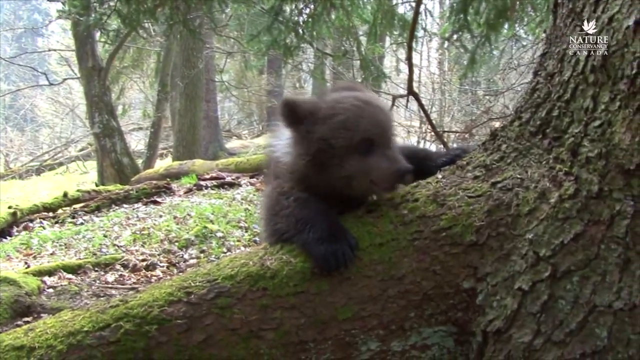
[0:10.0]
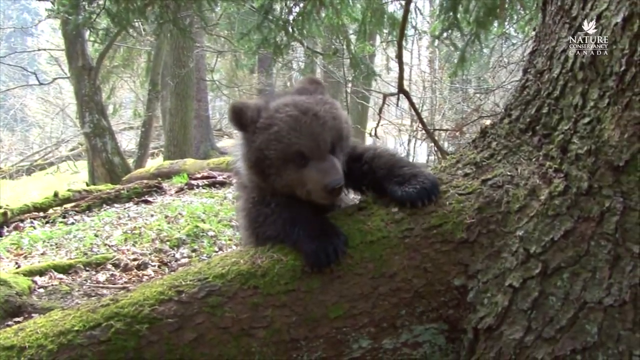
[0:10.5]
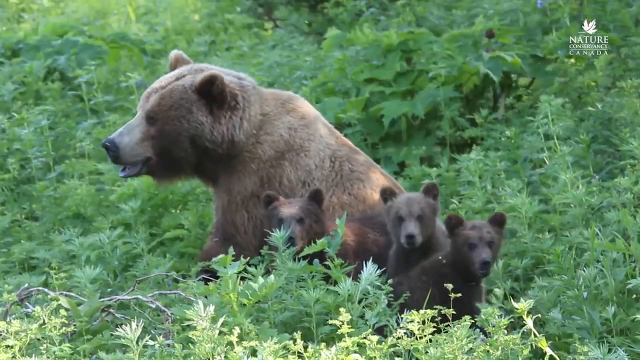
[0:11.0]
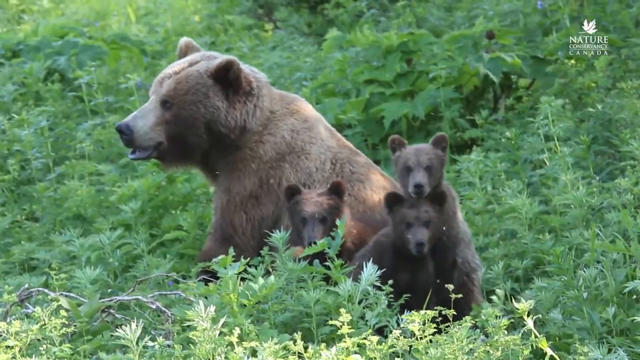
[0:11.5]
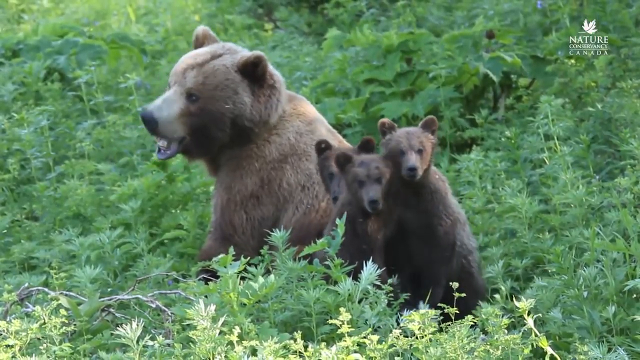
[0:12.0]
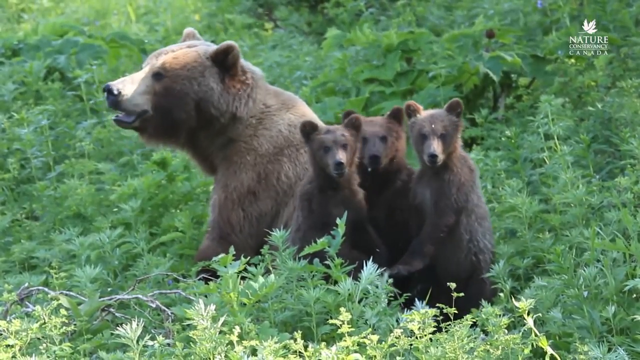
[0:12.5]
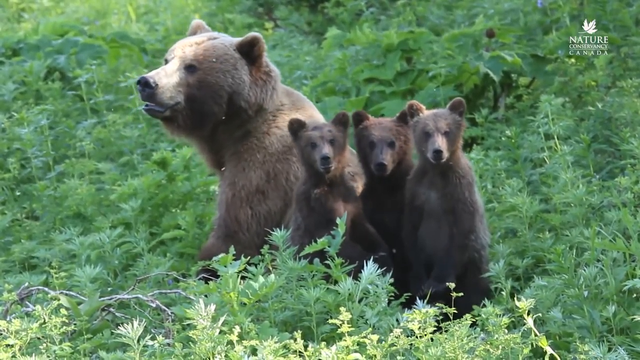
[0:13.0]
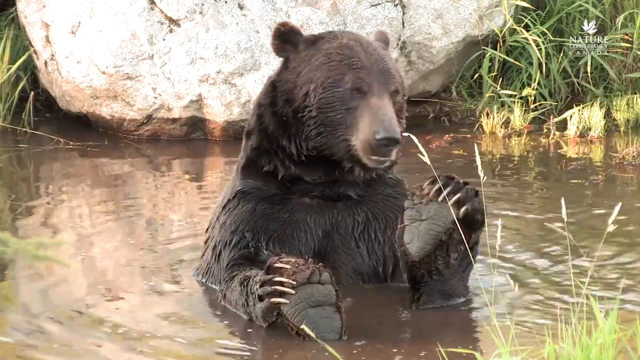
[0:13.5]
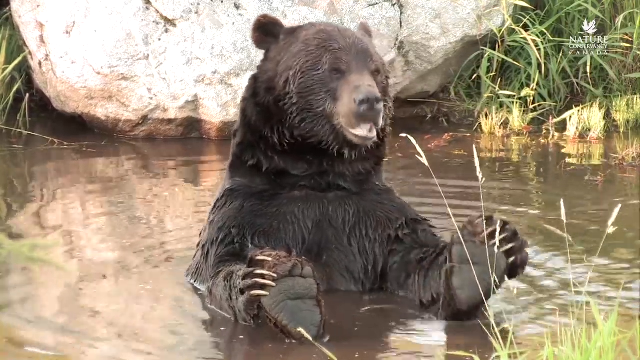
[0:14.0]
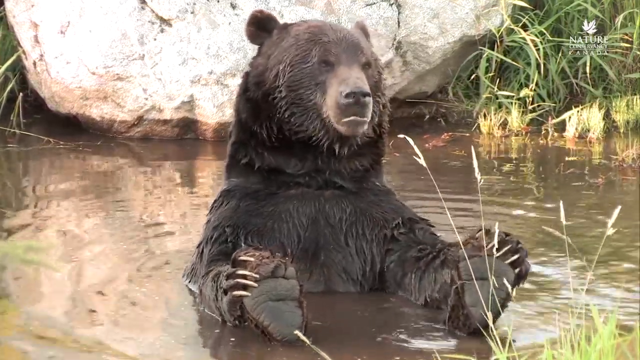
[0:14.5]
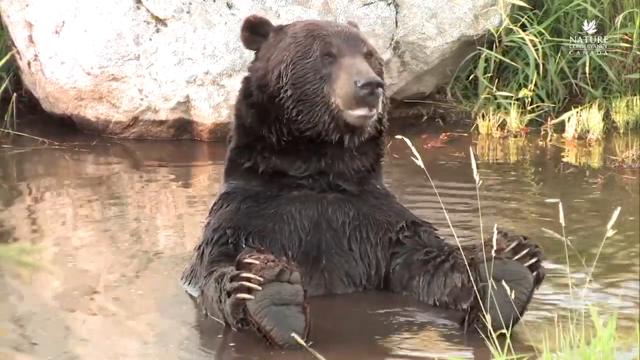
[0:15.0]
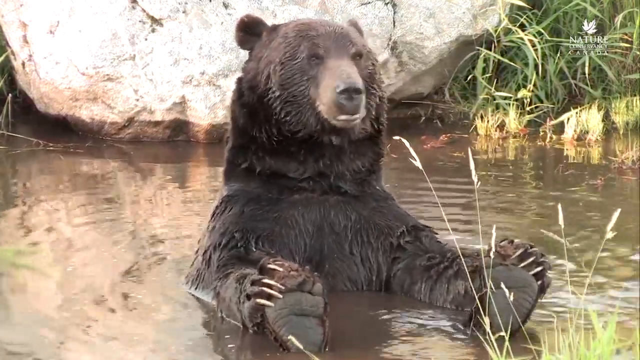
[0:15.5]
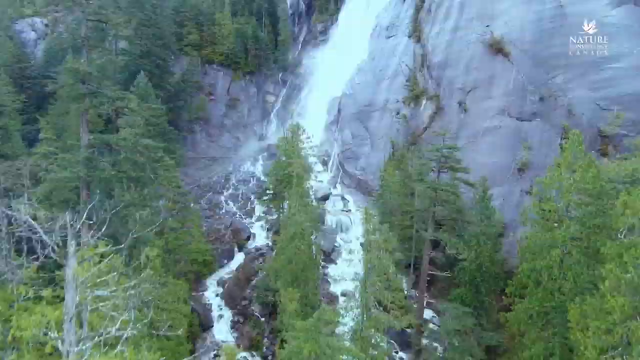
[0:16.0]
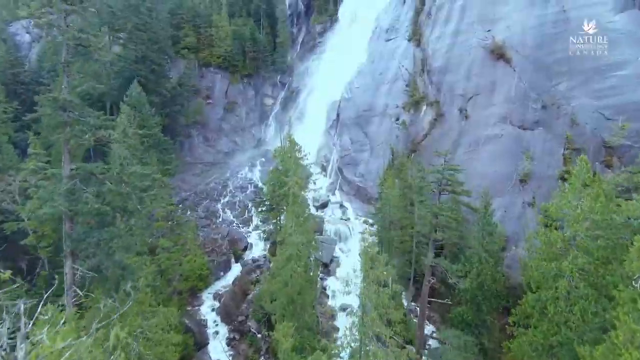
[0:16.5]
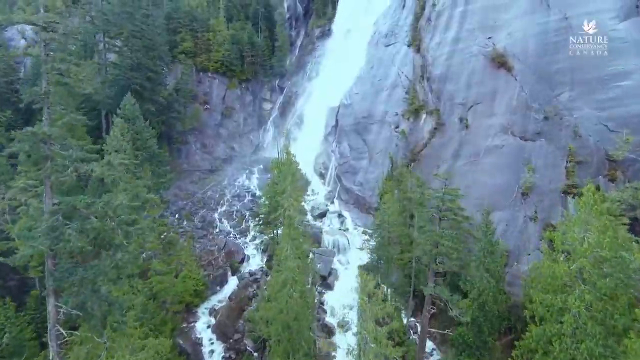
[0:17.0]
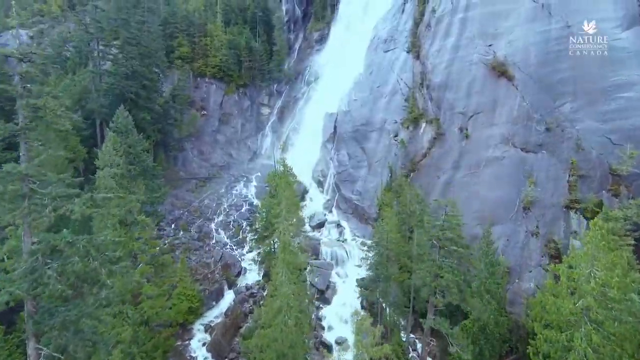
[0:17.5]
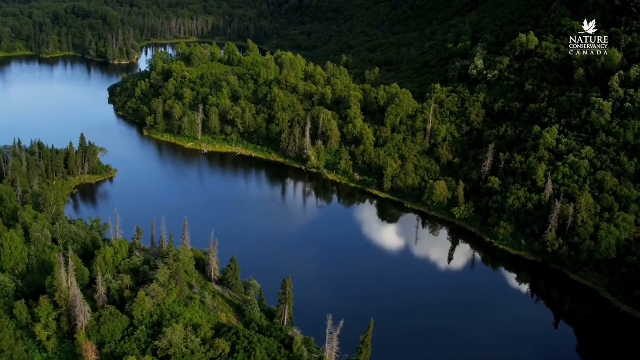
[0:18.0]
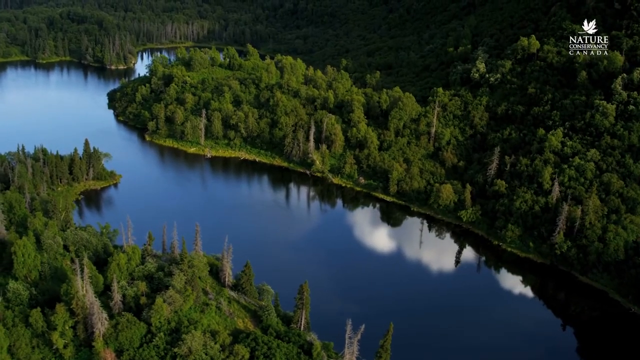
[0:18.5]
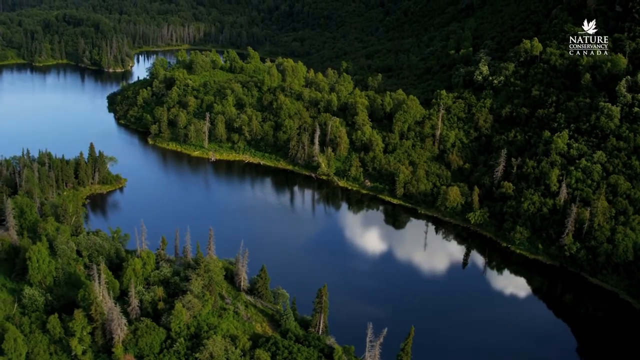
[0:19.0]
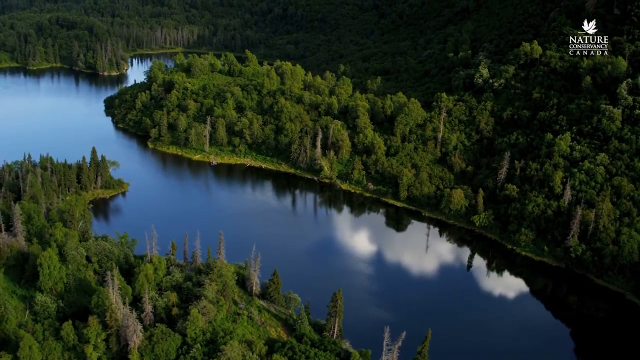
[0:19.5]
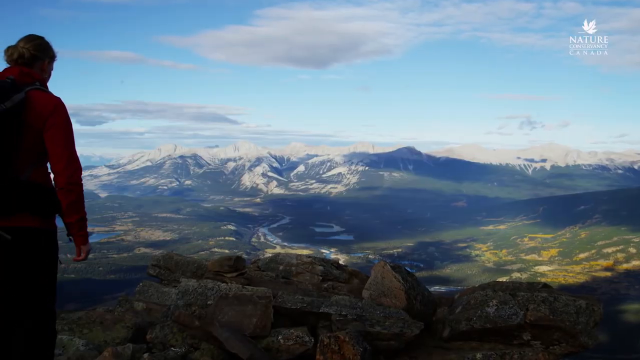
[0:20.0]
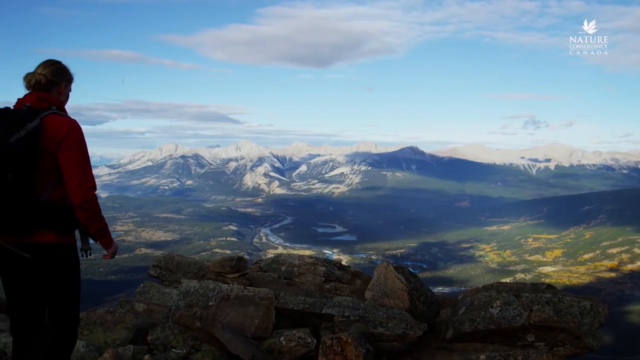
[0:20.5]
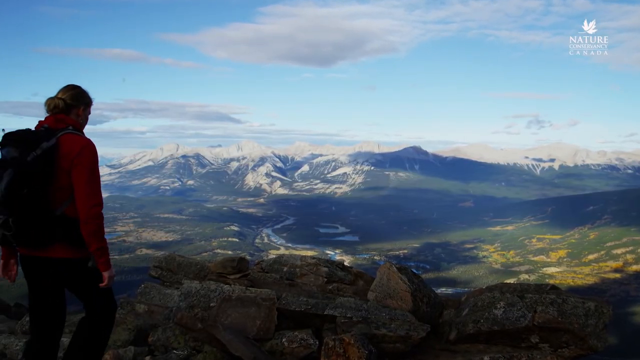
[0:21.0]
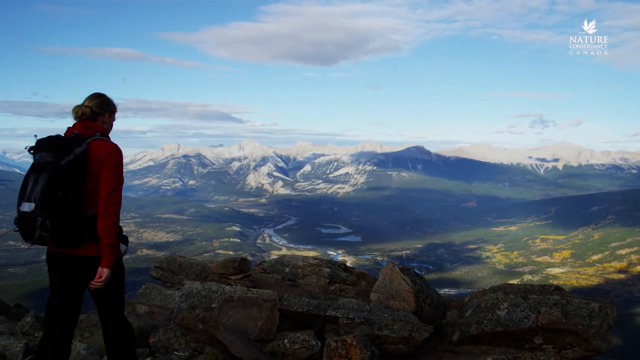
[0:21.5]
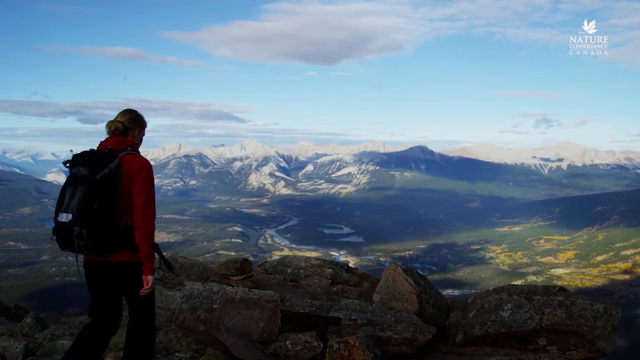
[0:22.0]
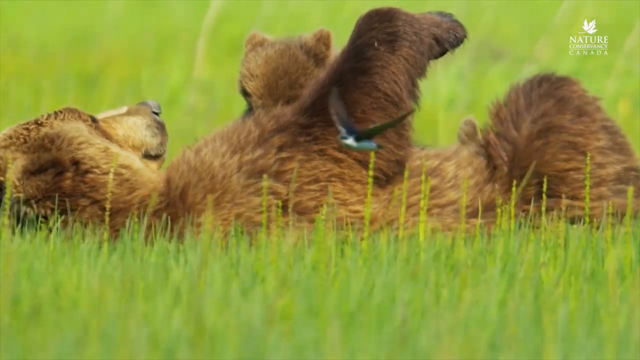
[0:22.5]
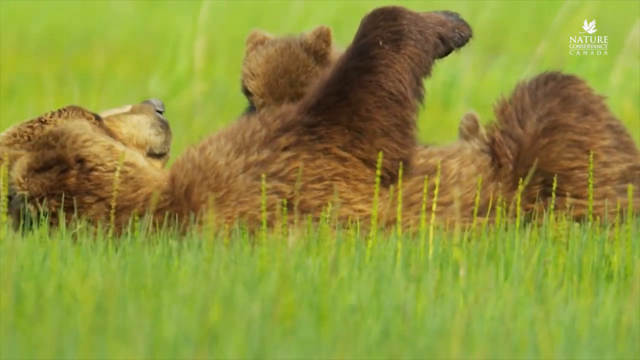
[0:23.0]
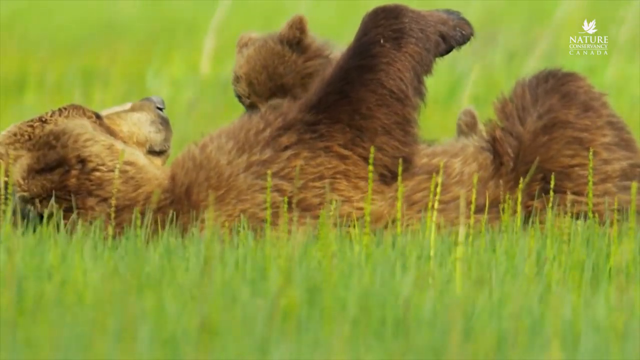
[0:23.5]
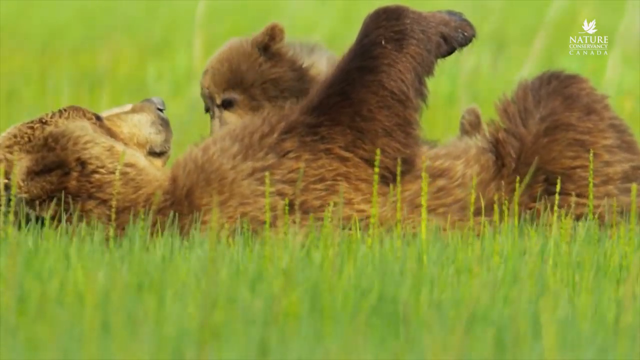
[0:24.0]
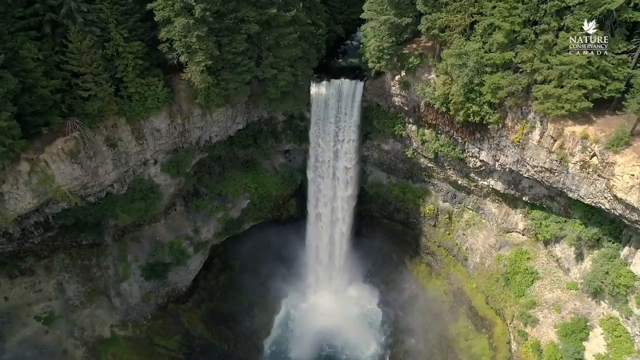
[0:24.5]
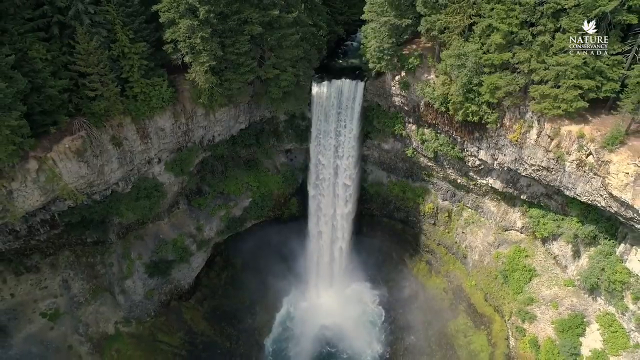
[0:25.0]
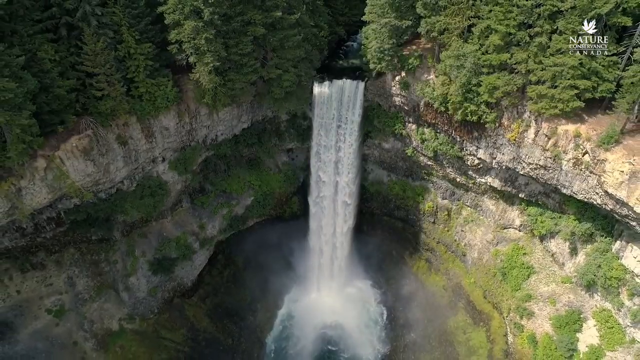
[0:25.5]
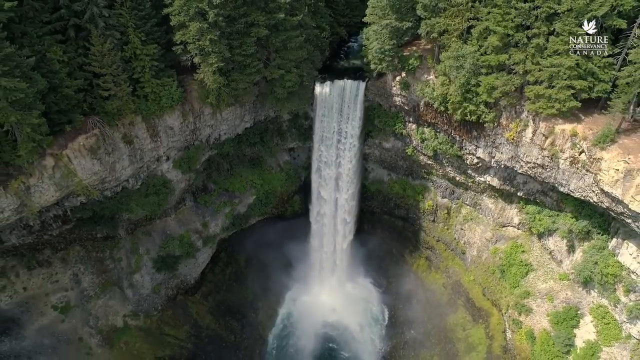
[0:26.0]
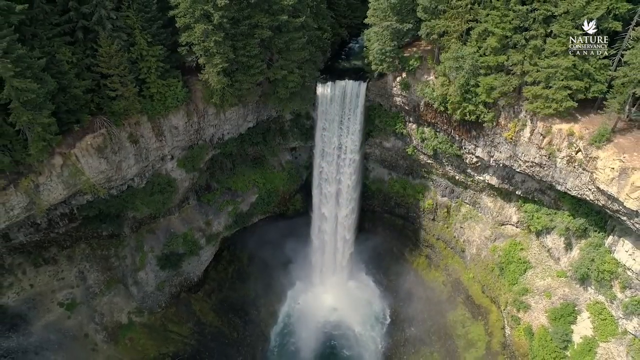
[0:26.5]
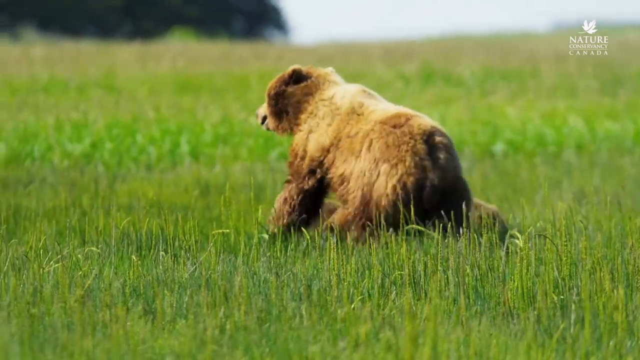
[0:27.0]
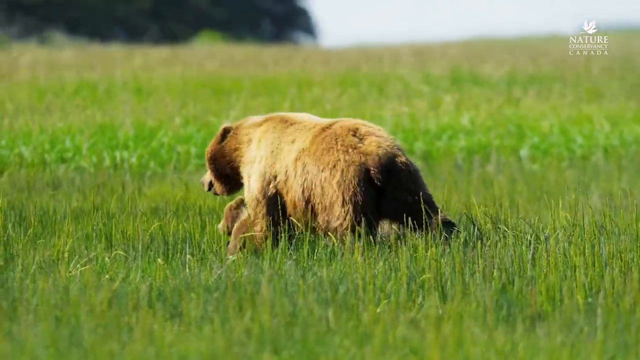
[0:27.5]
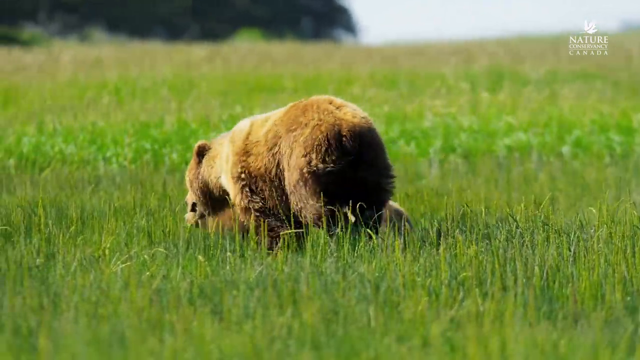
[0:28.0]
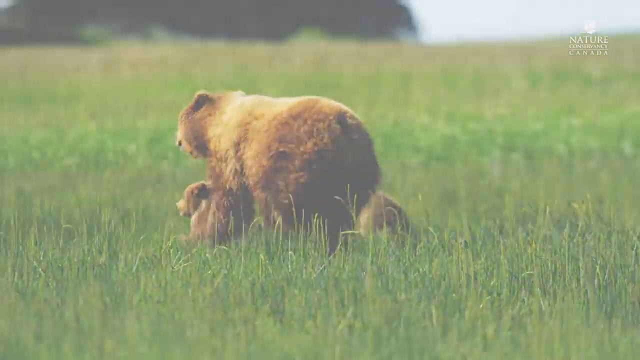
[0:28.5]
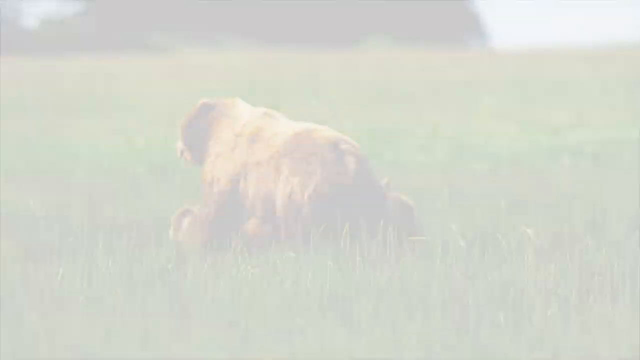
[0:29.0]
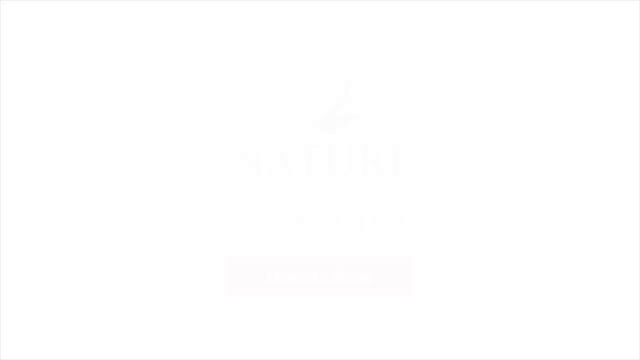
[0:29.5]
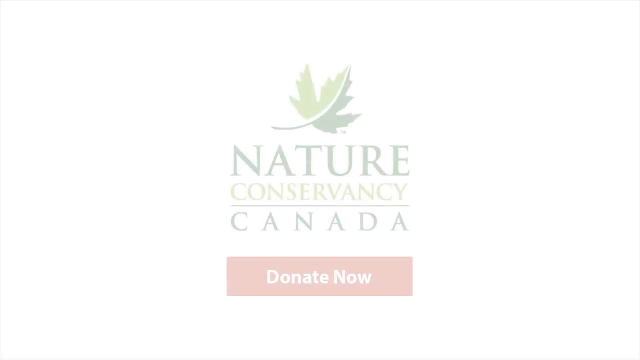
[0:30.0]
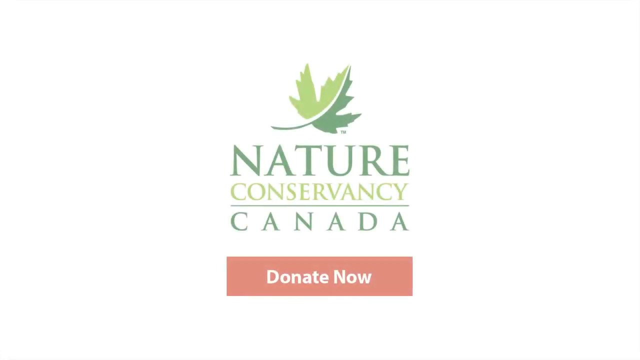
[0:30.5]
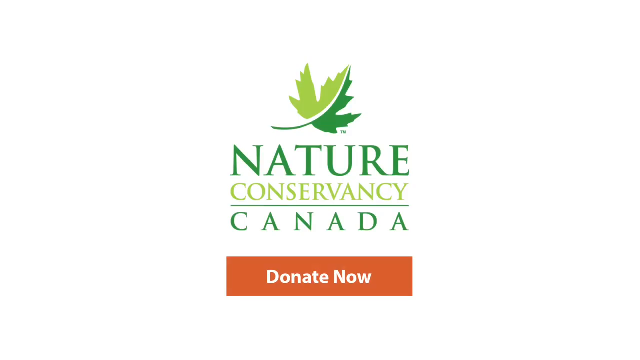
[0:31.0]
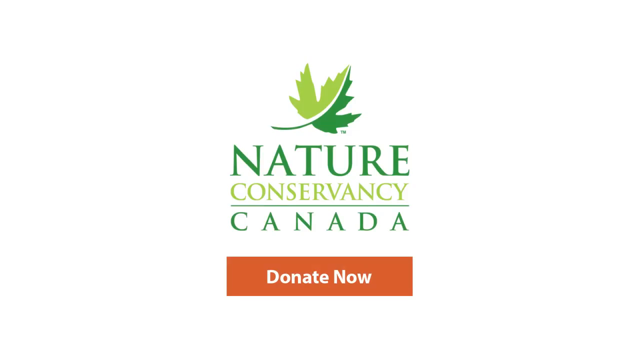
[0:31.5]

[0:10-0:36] A bear tries to climb over what looks like a log. The video cuts to footage of what looks like a large bear, possibly the mother, looking off to the left side of the camera while three cubs look toward the camera. One cub is on the left side and two are on the right, one of them on top of the other, looking over the other's head. The three cubs then stand up straight next to each other and look straight at the camera. A bear appears to be in the water, eating something, seemingly holding onto its feet, which are almost sticking out of the water. More overhead footage follows, showing what looks like a rushing river at the bottom of a waterfall, with white water rushing down from the waterfall on the side of a cliff and green trees around it. Next is what looks like a still lake area surrounded by green trees. A person walks into view from left to right, and then a bear is shown on its back in a field.